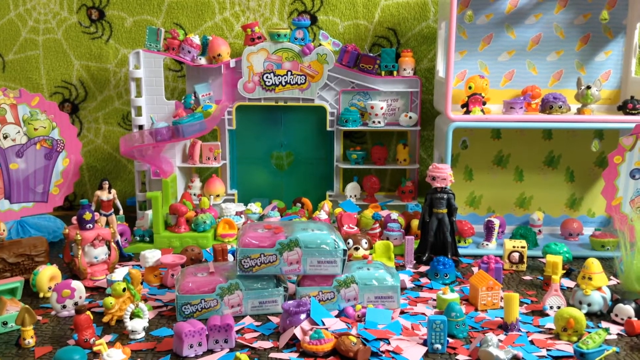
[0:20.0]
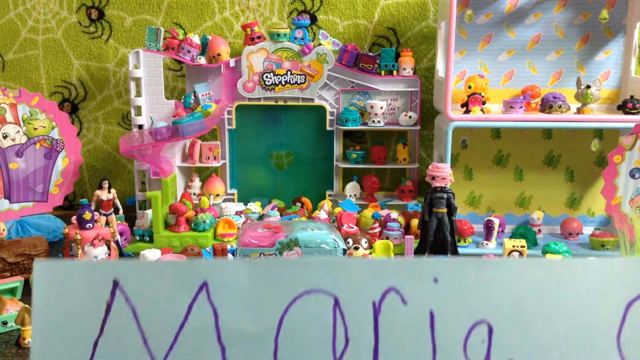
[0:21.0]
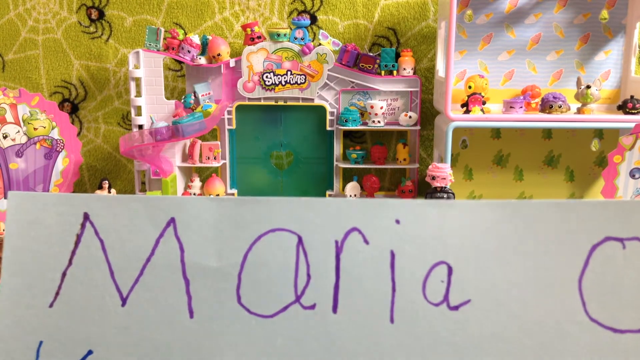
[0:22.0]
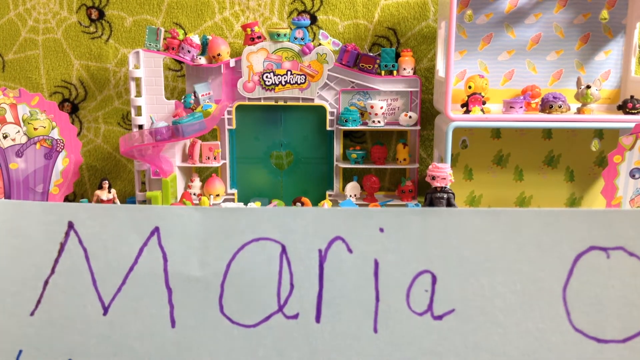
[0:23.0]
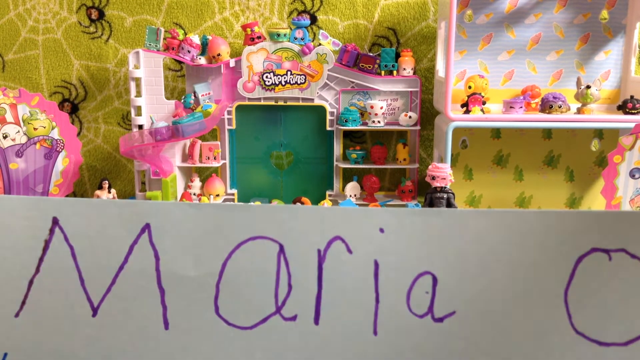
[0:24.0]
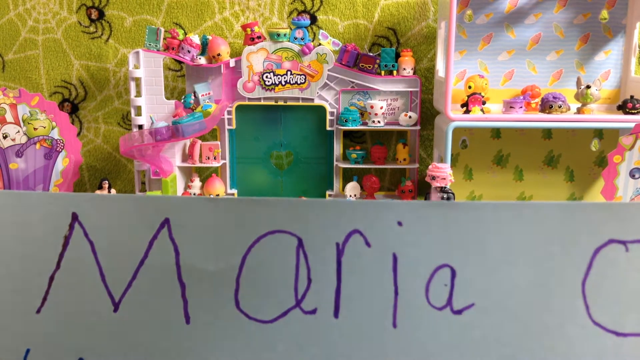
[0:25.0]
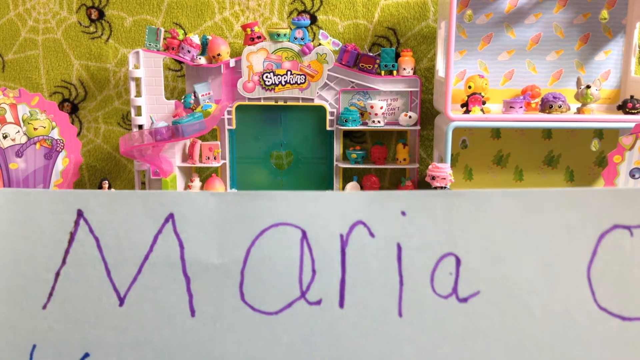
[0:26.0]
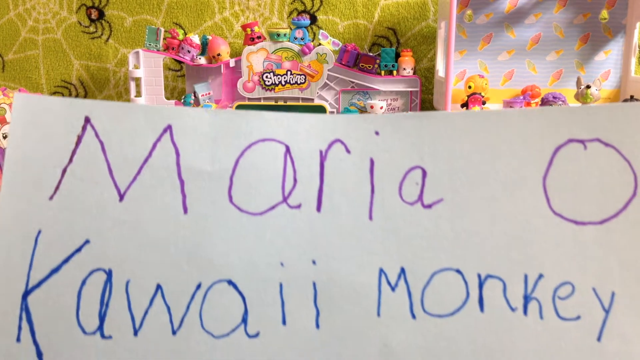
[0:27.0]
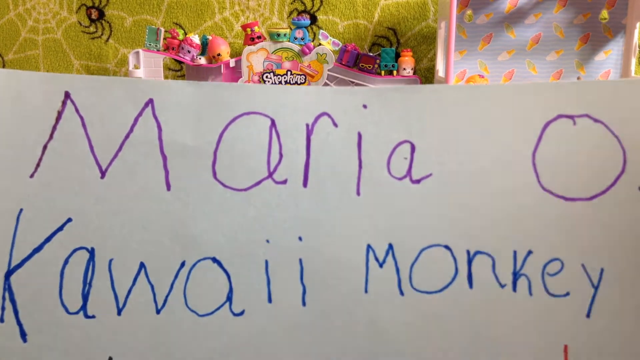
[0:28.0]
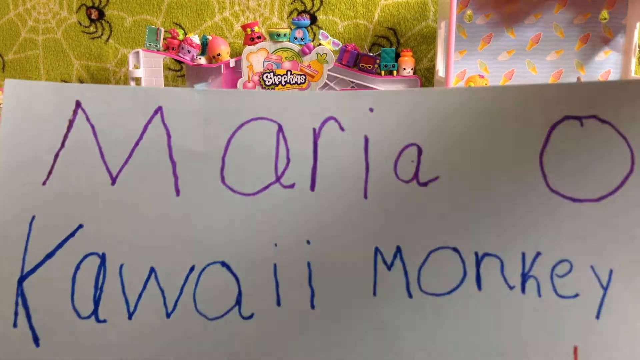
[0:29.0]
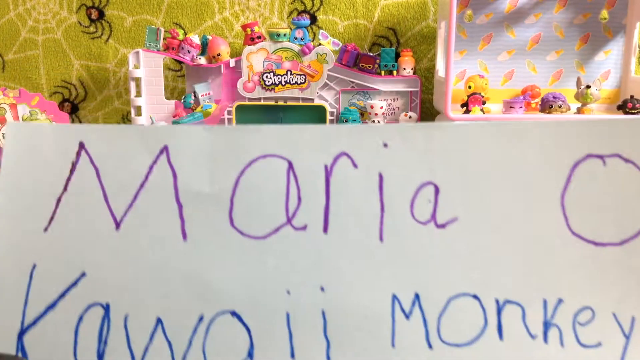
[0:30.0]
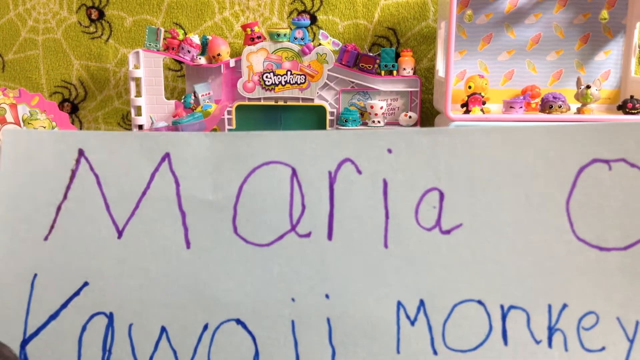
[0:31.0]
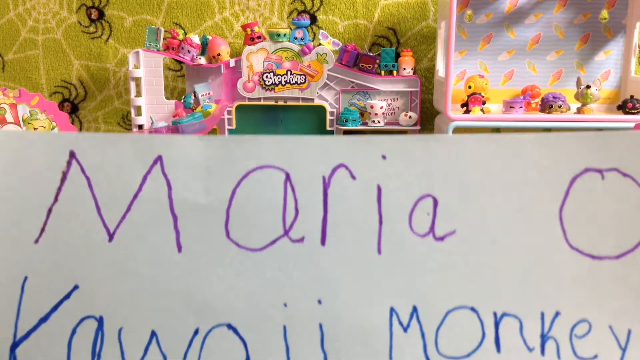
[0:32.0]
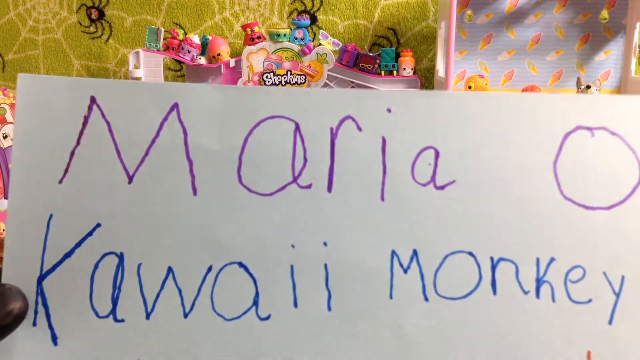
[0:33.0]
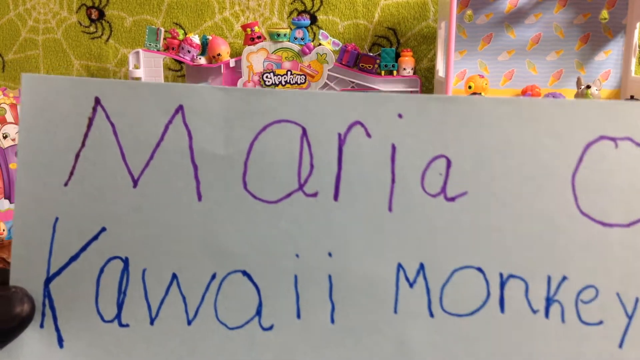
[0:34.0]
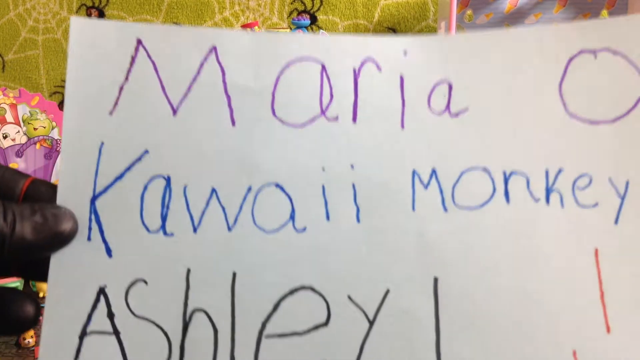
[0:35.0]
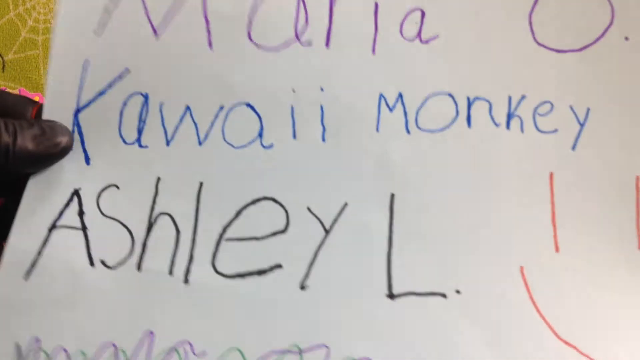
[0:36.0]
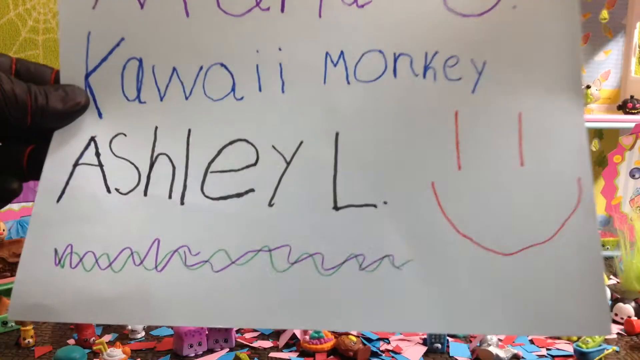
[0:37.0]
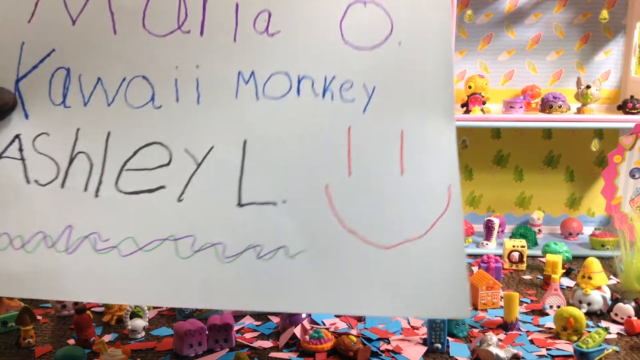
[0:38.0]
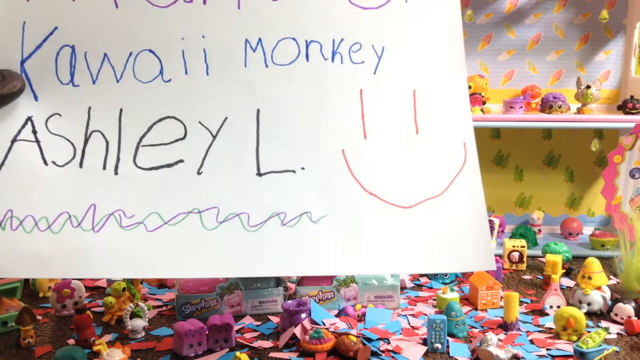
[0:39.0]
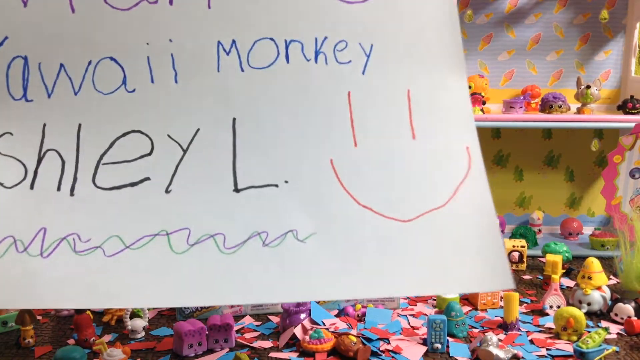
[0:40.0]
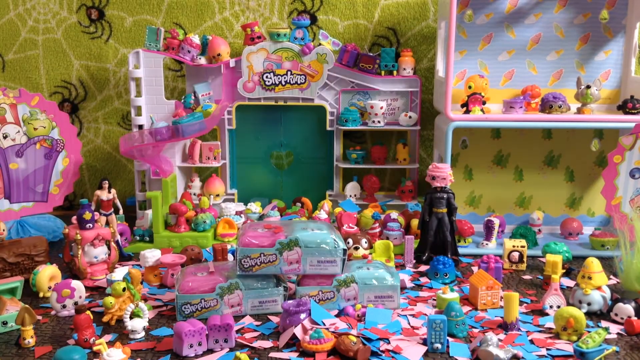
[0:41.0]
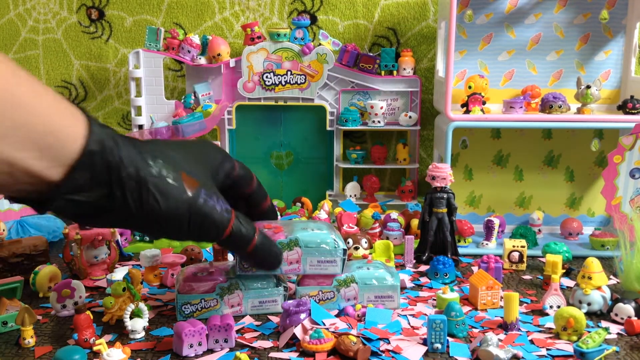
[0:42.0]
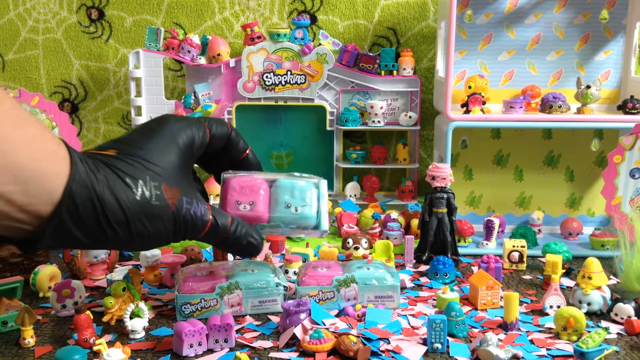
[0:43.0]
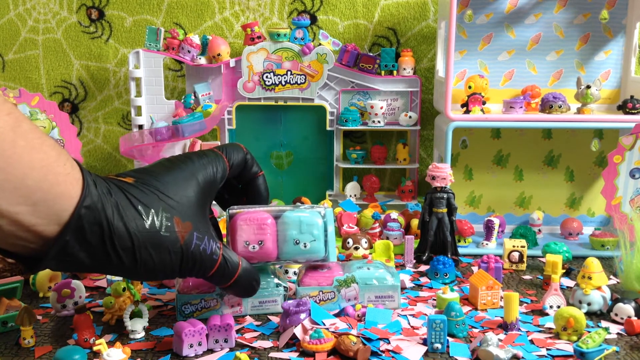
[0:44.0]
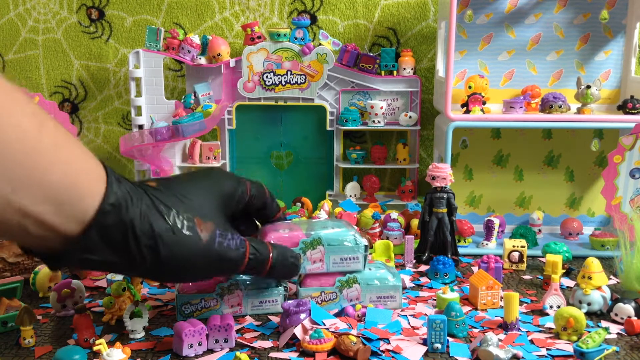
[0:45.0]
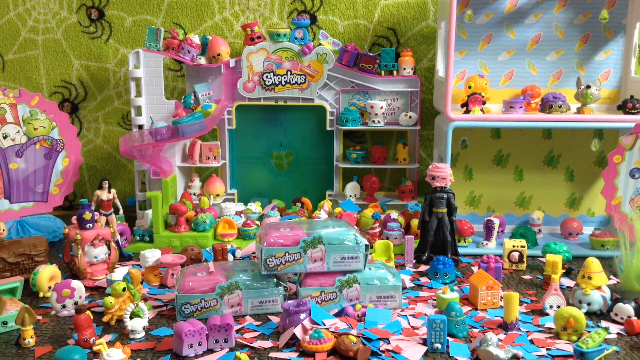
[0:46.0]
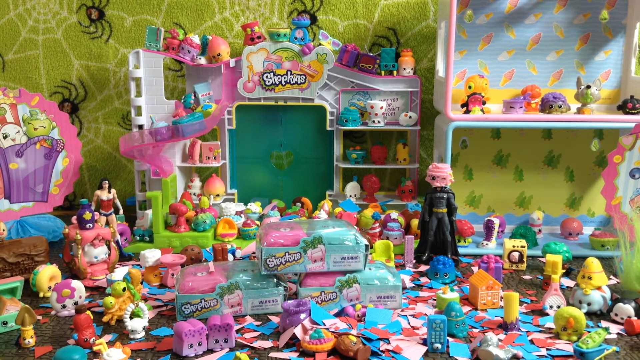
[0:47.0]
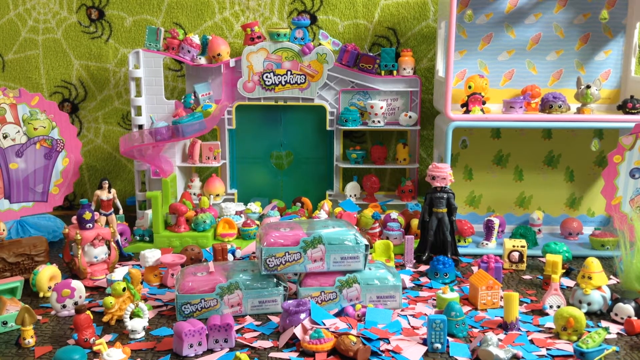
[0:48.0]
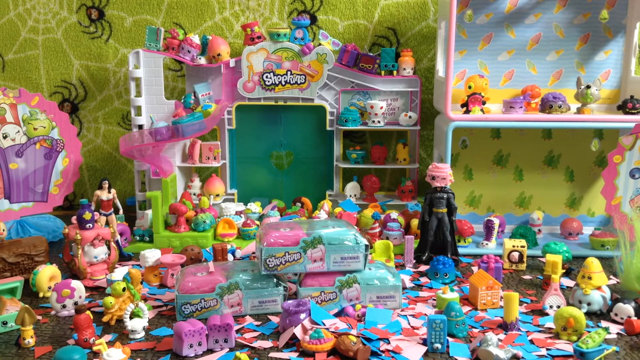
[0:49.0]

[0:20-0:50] The room is full of toys of different colors. There is a Spider-Man, a Batman, and another toy wearing blue pants and a red blouse. The wall is green with cobweb designs and some blood spatters. Text pops up reading "Maria" in purple on a white background, followed by "kawaii monkey" in blue, and below that "Ashley M"; the text is written on a white piece of paper. Then the hand of a person wearing black gloves picks up a pink toy that also has some bluish colors. The place looks like a kids' playroom for toys.